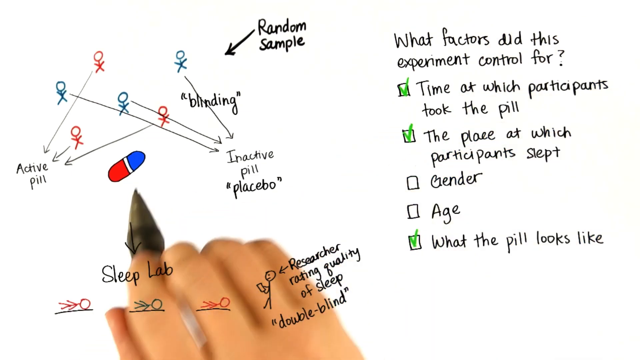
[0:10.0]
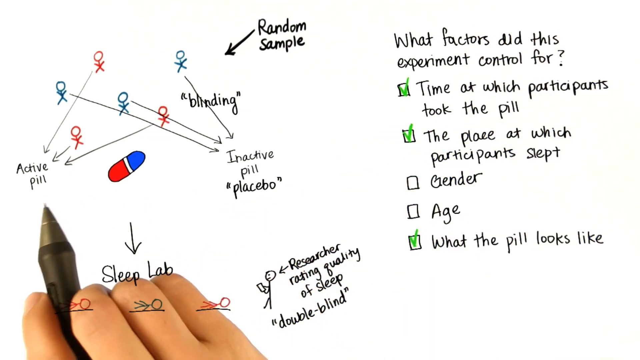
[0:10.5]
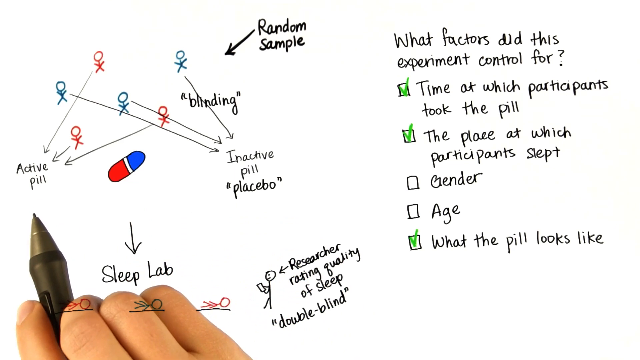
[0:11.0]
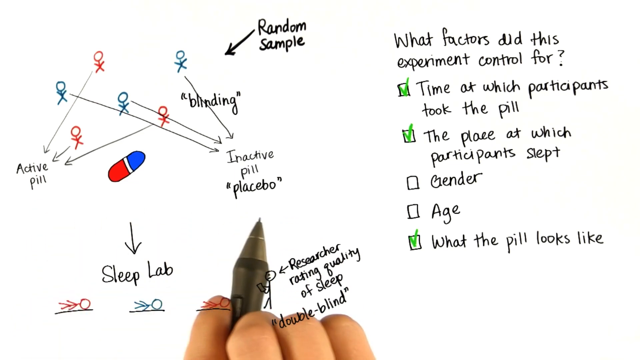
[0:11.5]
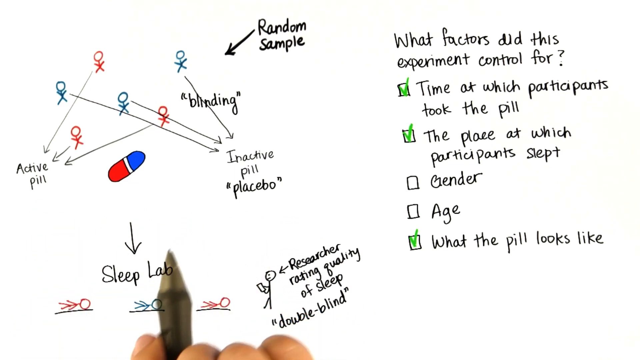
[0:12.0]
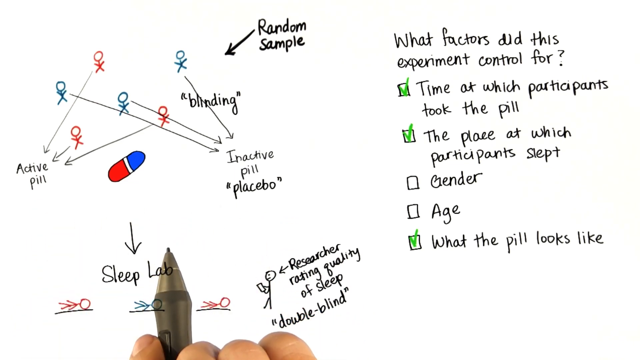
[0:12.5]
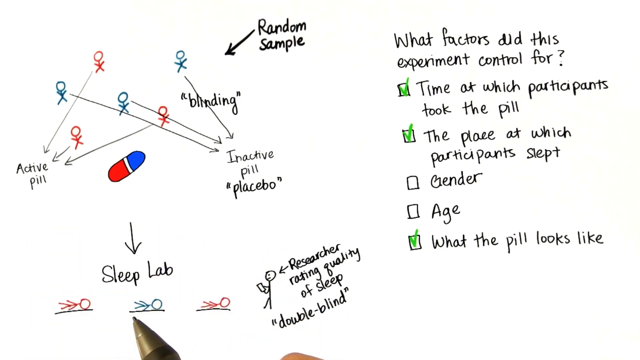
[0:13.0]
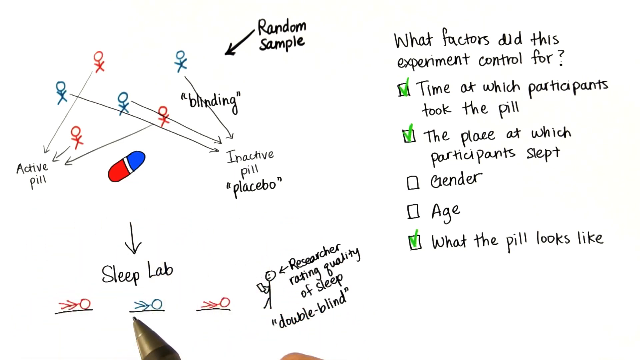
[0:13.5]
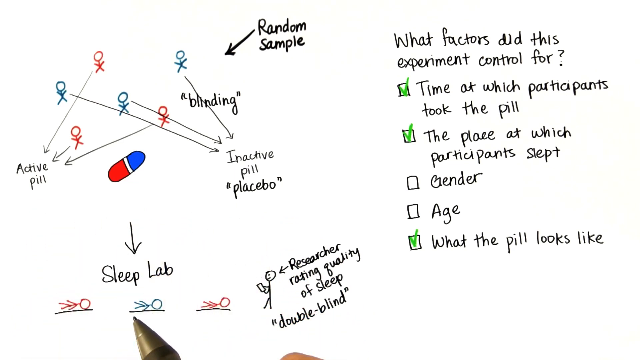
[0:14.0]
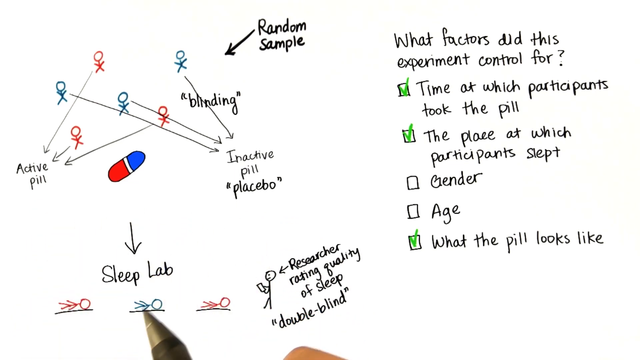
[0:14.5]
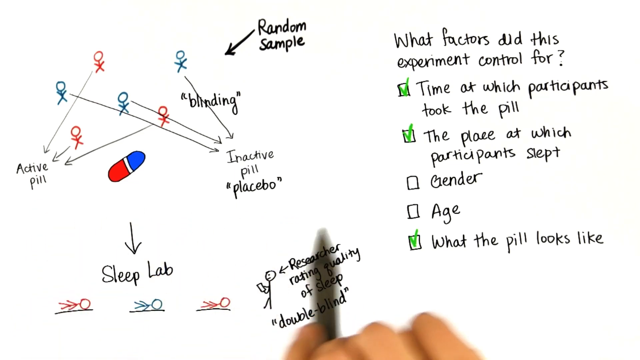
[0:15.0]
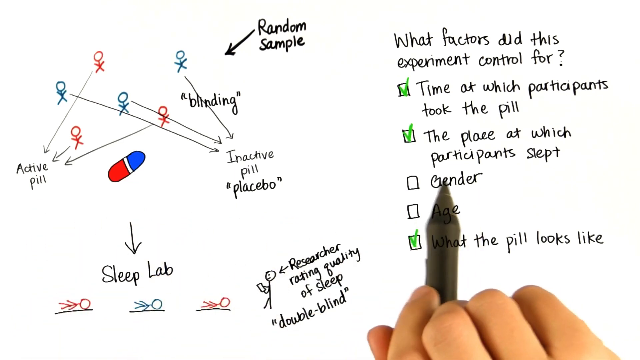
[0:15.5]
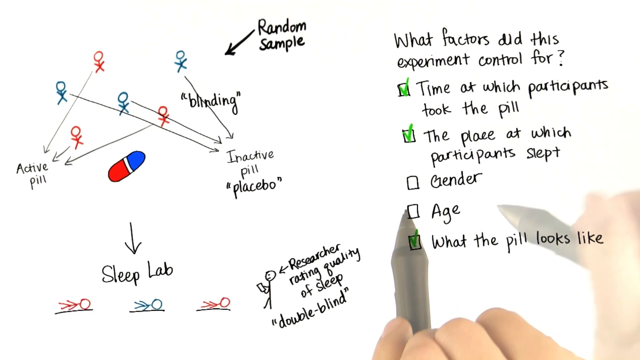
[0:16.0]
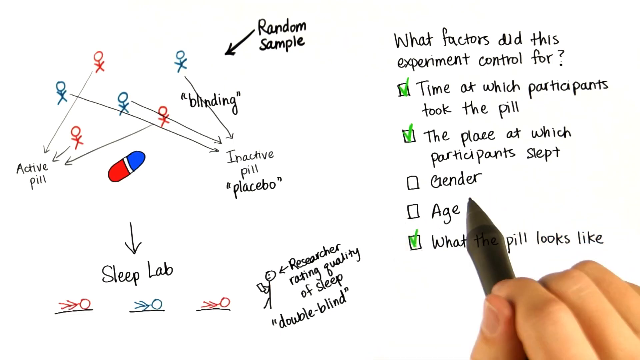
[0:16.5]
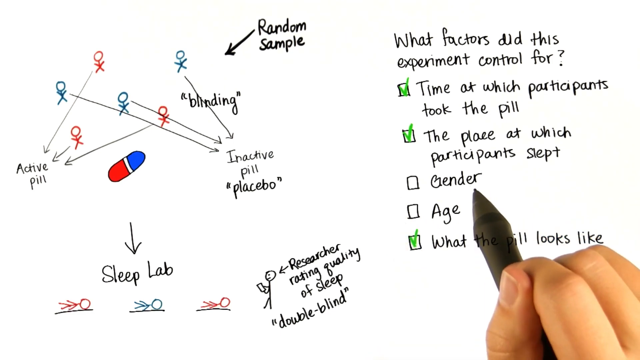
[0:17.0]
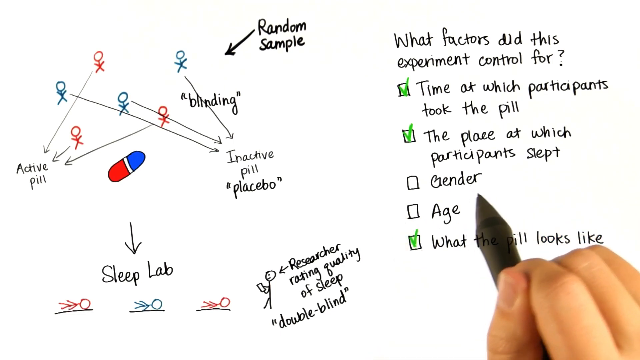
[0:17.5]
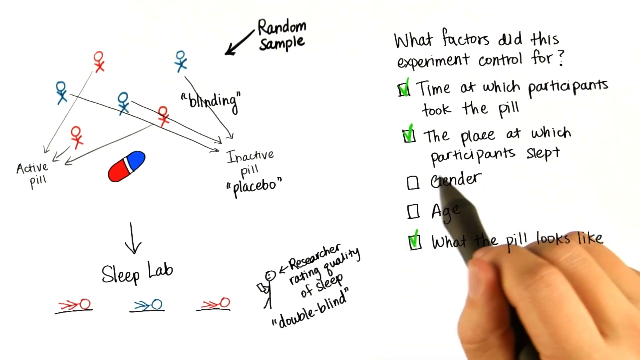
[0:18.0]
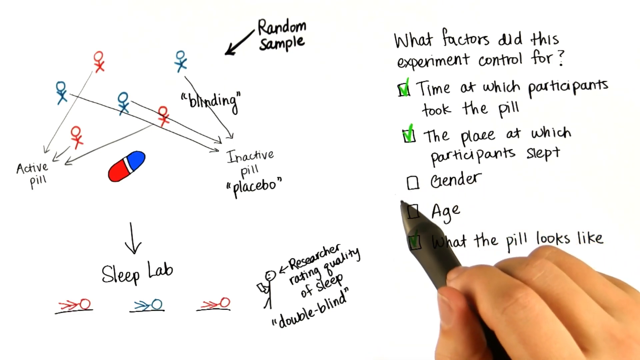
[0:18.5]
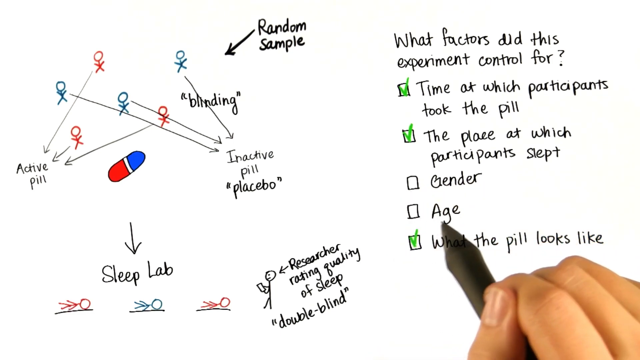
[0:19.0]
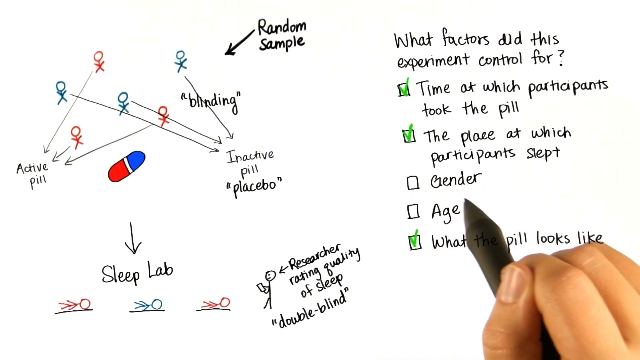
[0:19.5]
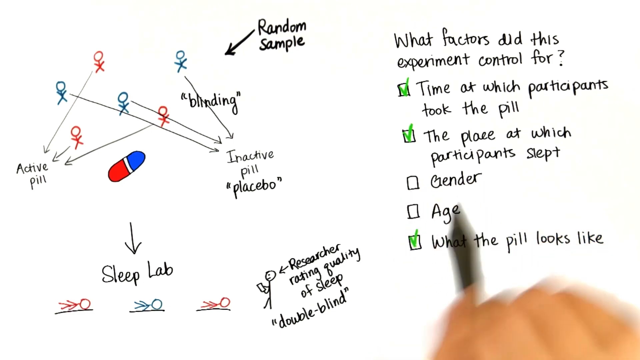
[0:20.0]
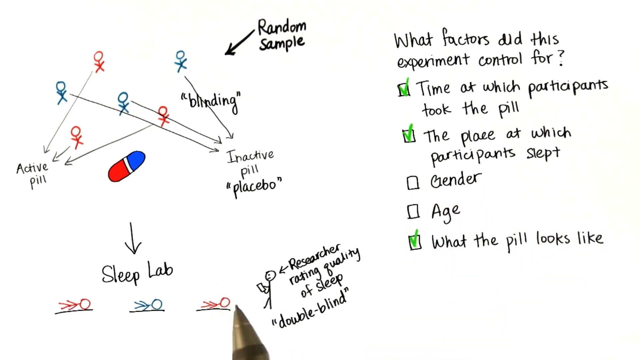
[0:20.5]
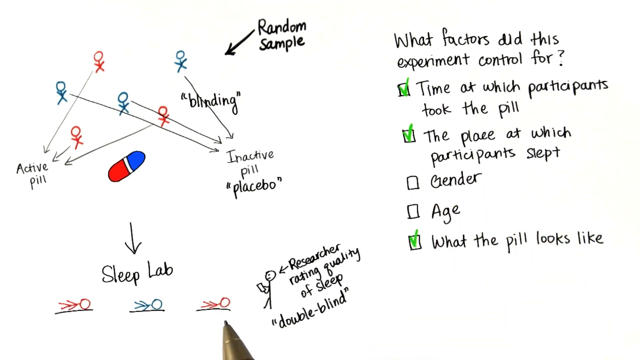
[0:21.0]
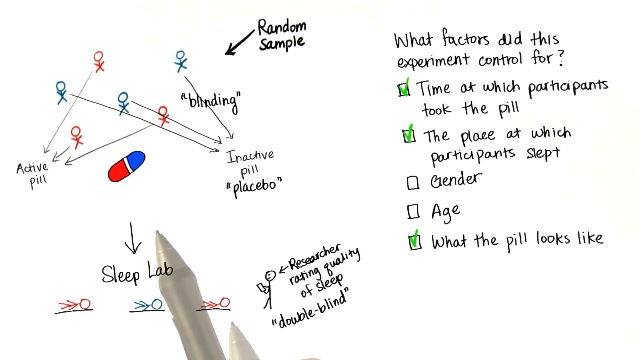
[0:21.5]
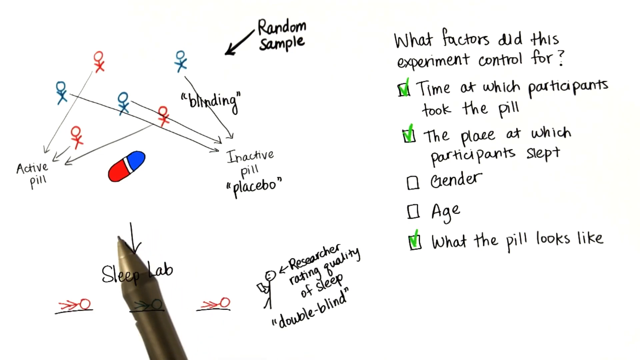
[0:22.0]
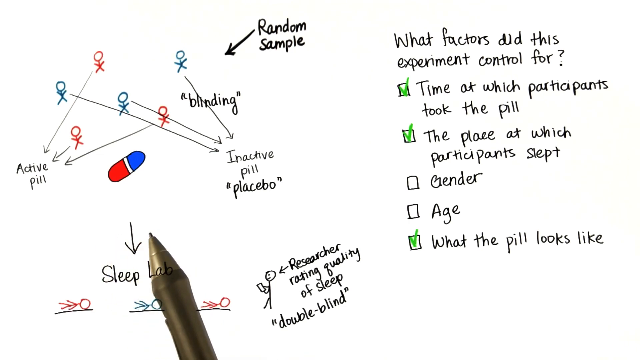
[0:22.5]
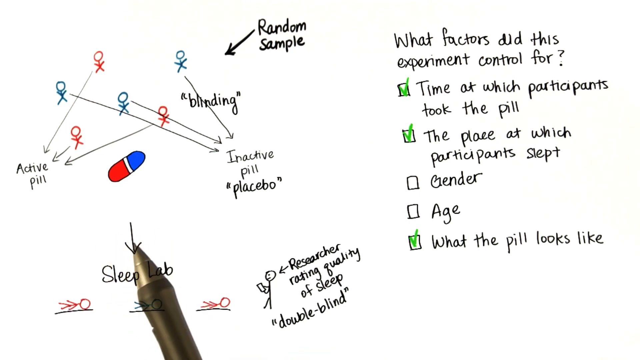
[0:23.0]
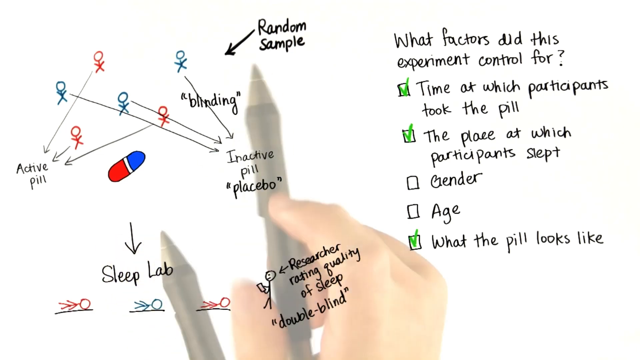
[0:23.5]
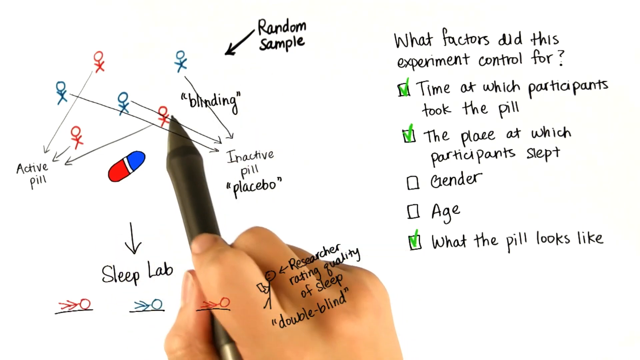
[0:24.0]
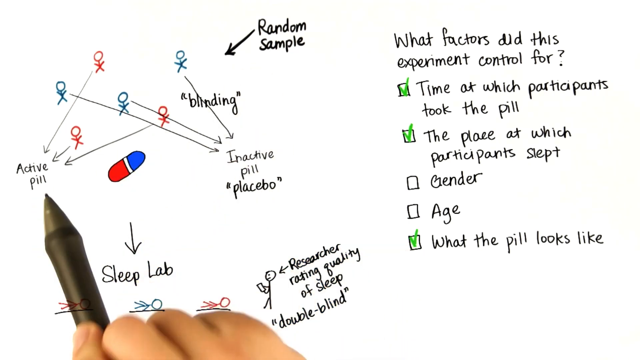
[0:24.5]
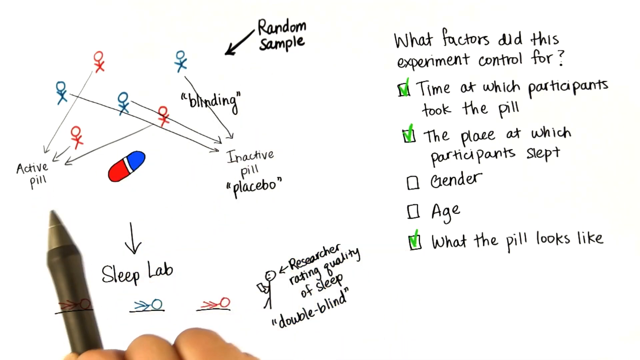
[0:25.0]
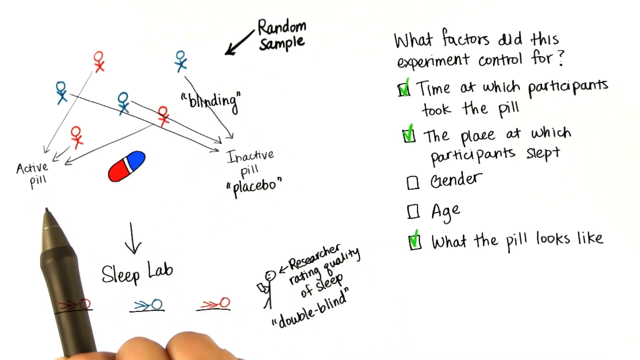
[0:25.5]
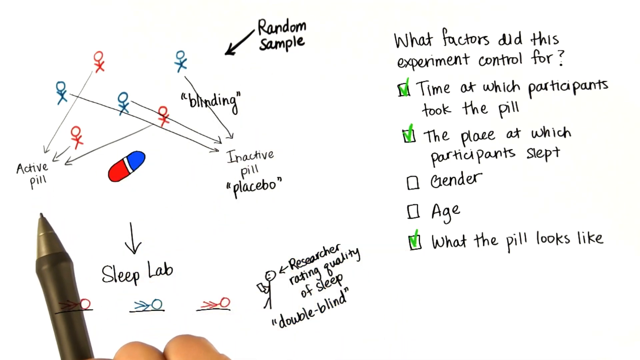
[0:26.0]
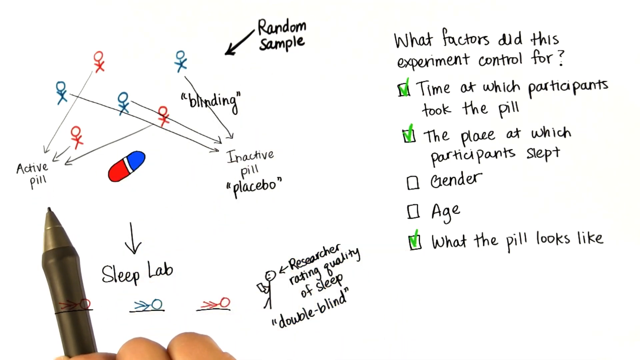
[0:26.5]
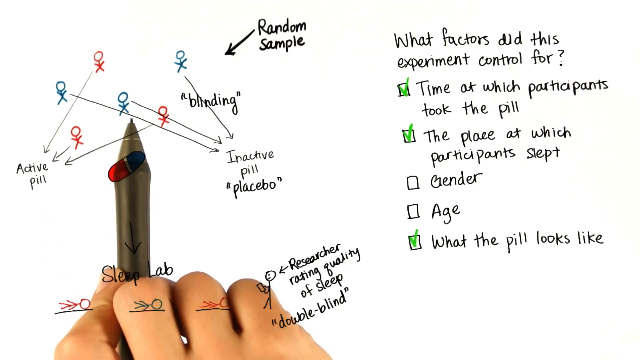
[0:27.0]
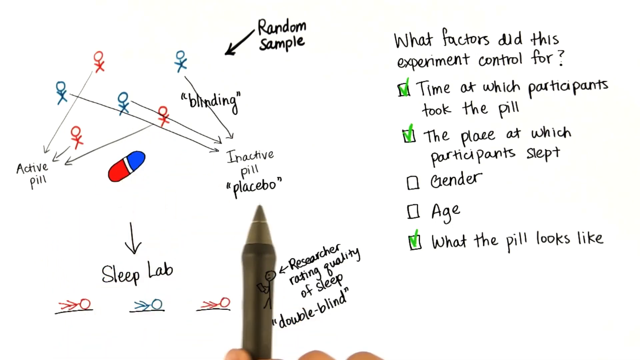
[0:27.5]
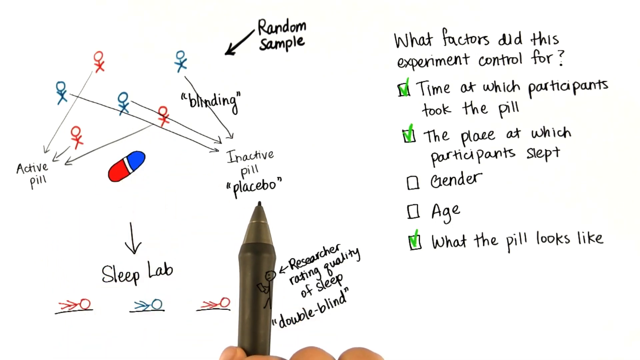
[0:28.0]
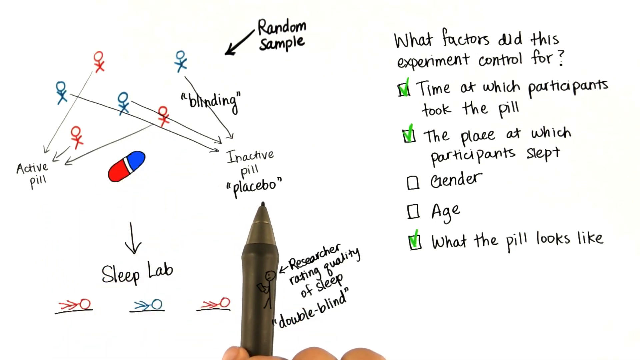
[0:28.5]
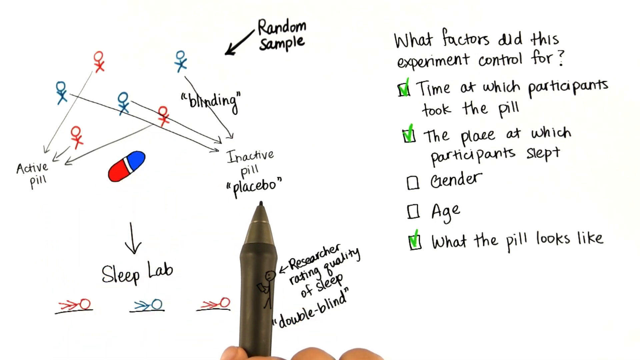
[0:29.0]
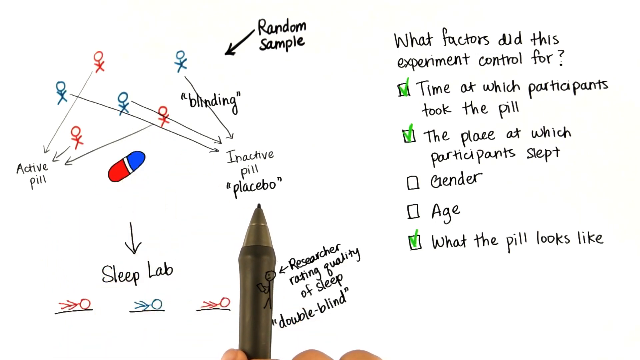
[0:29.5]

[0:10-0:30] Hand-drawn pictures and figures of people, some of them stick figures, are on the page: three blue and three red. Arrows come away from the people, with the words "random sample" pointing at the collection of six people. Arrows lead to "inactive pill placebo", and "active pill" goes from other people. The bottom of the screen says "sleep lab", and three stick figures lie down on a line while a researcher stick figure stands up, labeled "researcher rating quality of sleep double blind". On the right-hand side of the page is writing with the title "what factors did this experiment control", each item with a tick box: first "time at which participants took the pill", second "the place at which participants slept", third "gender", fourth "age", and fifth "what the pill looks like". The first, second and fifth boxes have been ticked with a green pen. A hand holding a black pen is visible, pointing out certain things in the picture and the writing. It circles the word "age" and points at various parts of the diagram and the words on the page.